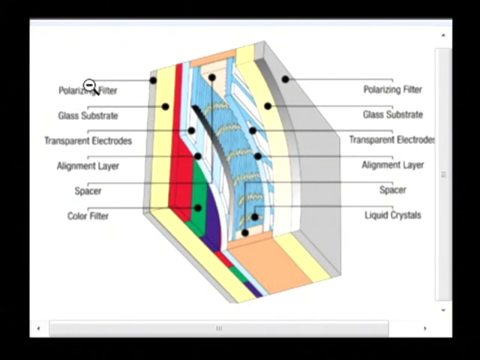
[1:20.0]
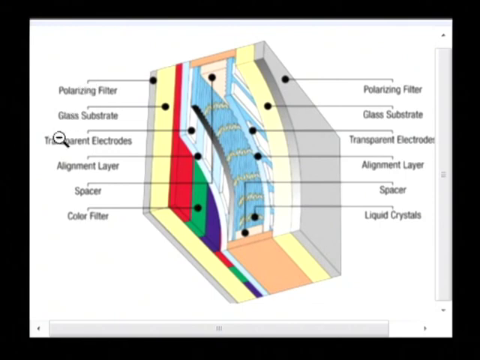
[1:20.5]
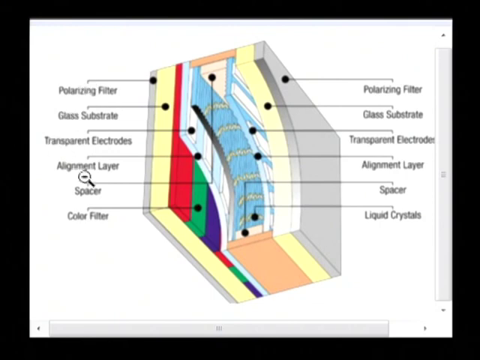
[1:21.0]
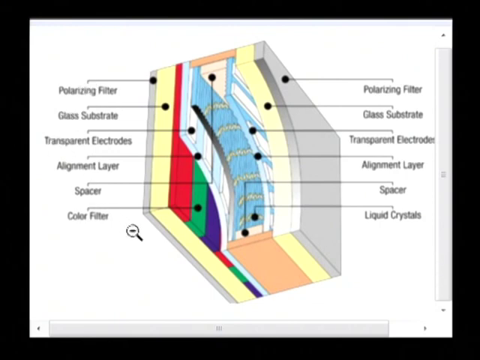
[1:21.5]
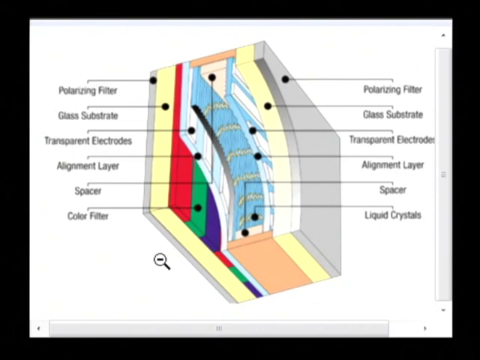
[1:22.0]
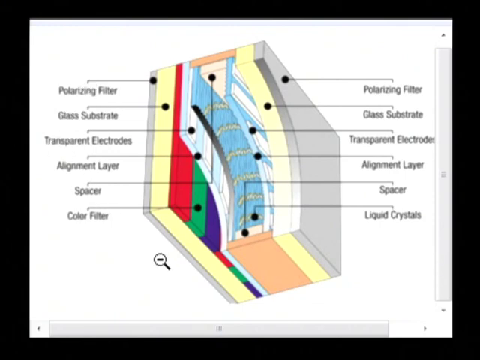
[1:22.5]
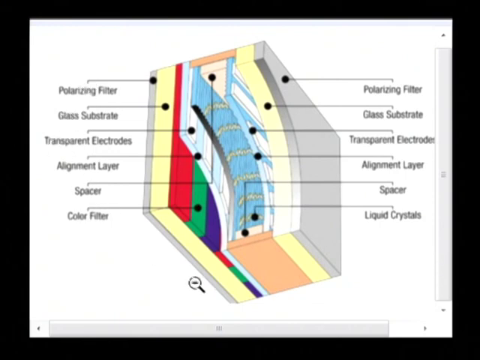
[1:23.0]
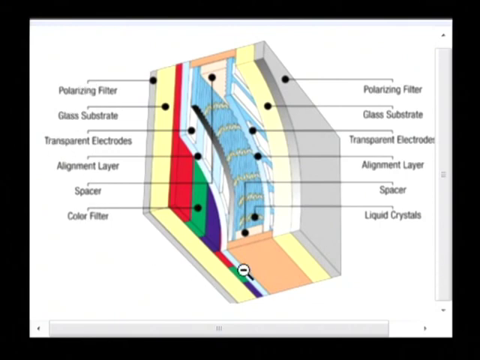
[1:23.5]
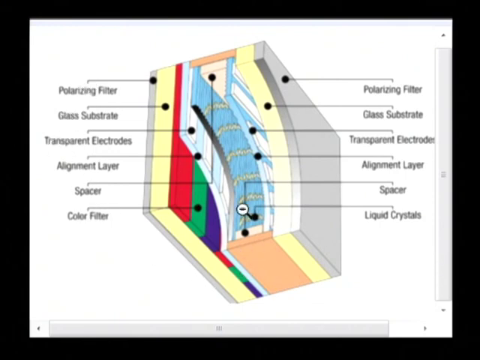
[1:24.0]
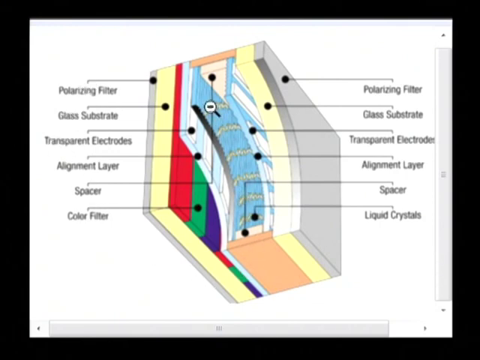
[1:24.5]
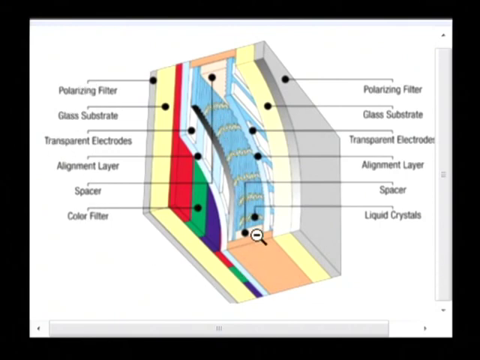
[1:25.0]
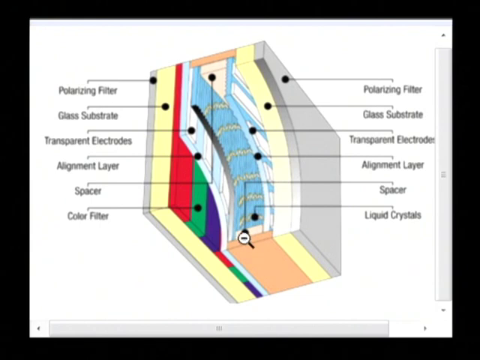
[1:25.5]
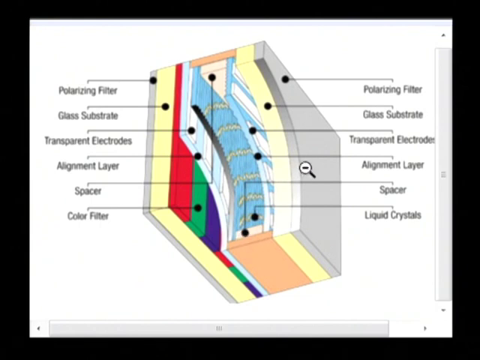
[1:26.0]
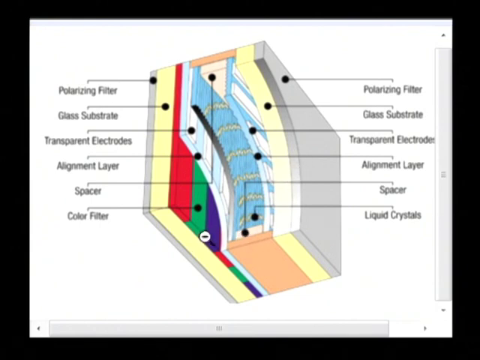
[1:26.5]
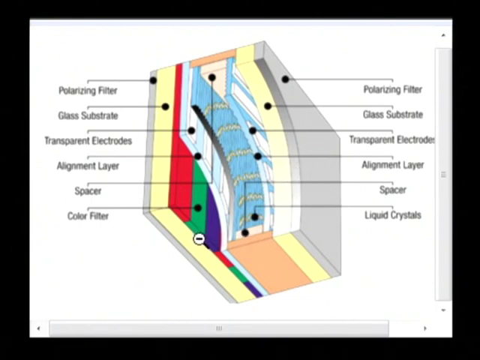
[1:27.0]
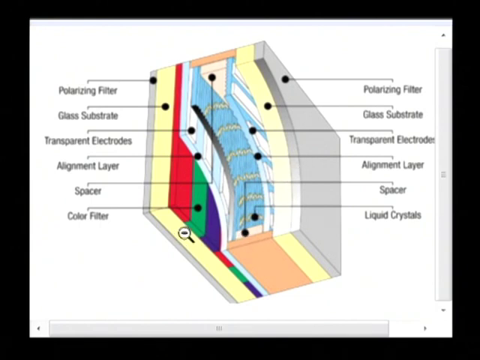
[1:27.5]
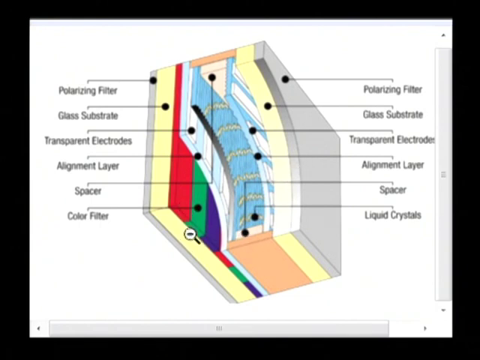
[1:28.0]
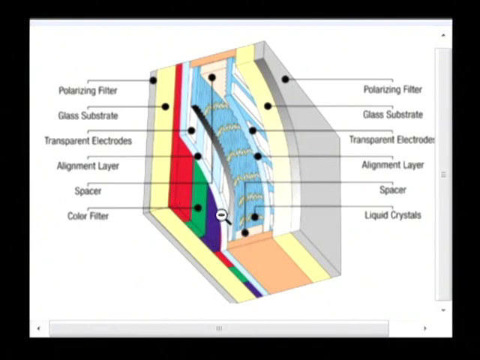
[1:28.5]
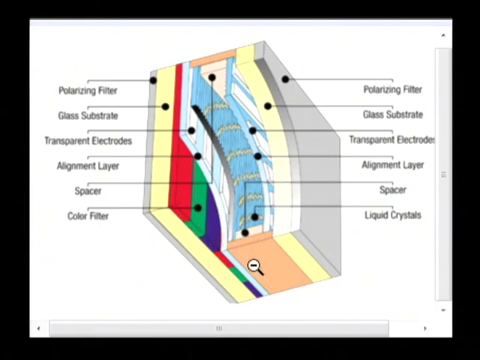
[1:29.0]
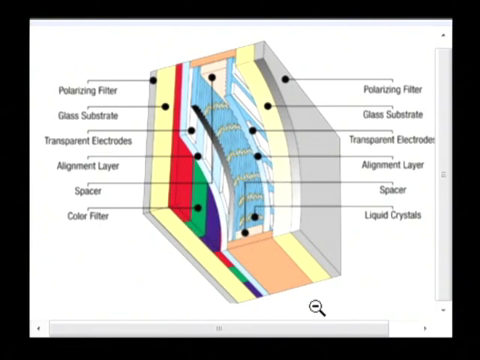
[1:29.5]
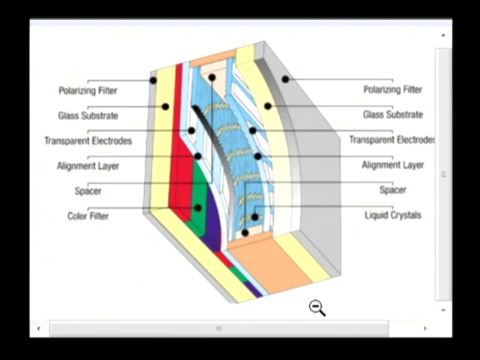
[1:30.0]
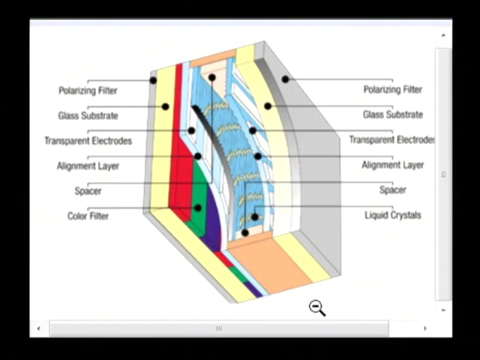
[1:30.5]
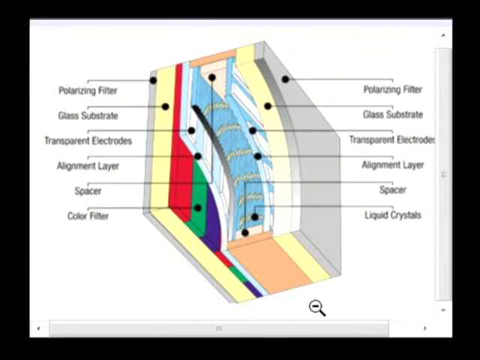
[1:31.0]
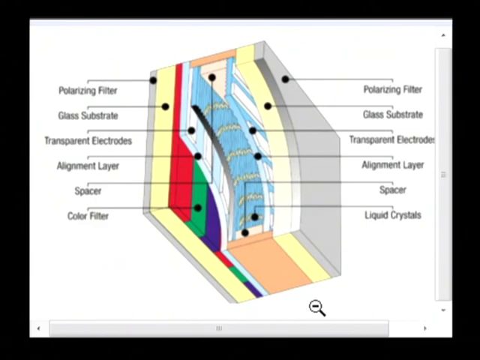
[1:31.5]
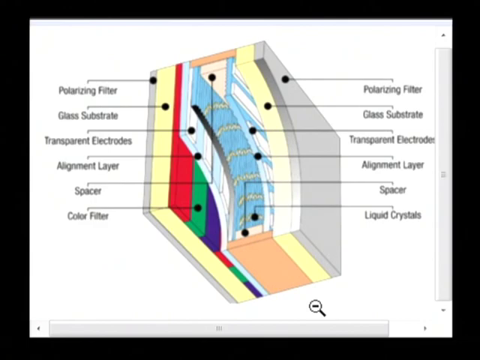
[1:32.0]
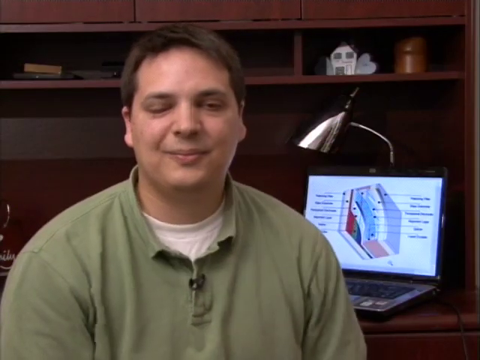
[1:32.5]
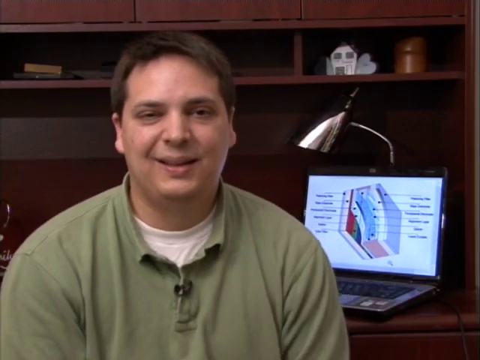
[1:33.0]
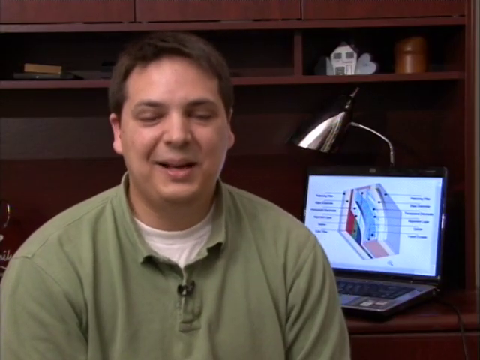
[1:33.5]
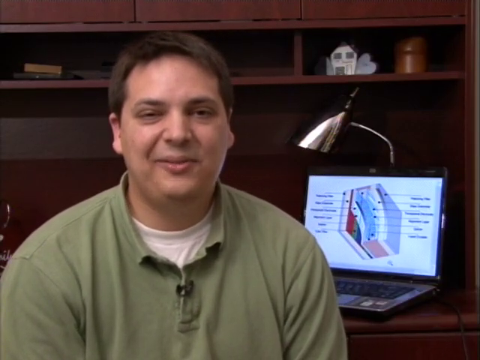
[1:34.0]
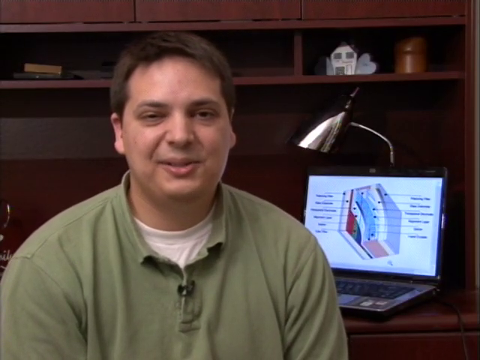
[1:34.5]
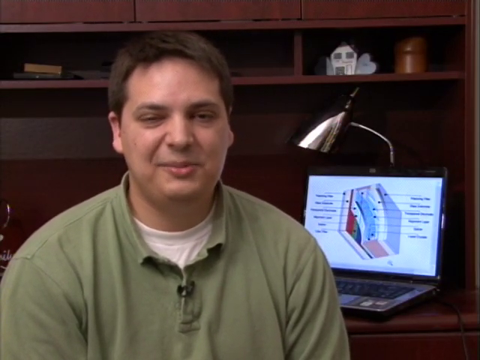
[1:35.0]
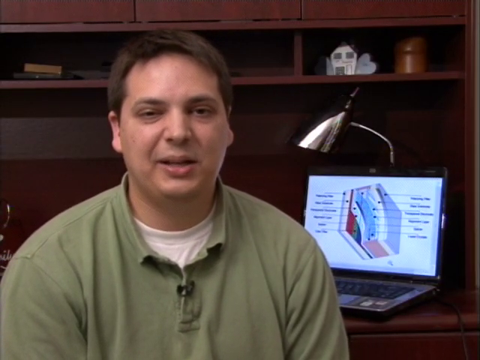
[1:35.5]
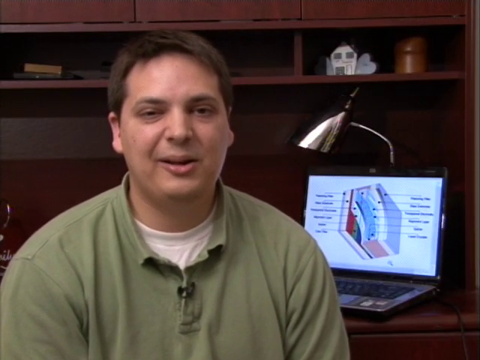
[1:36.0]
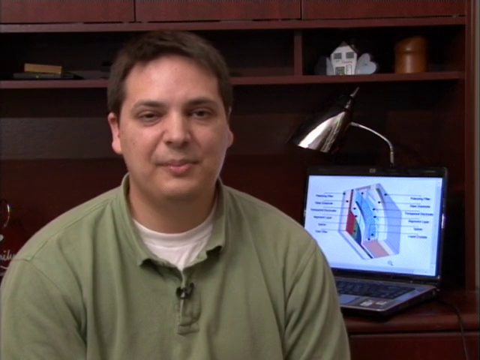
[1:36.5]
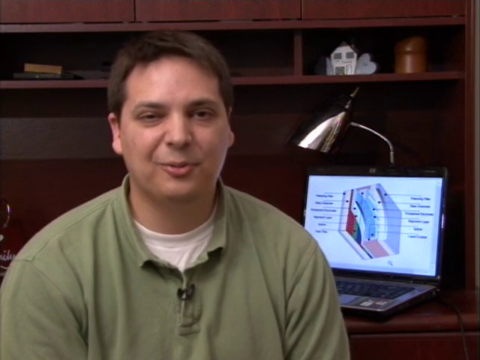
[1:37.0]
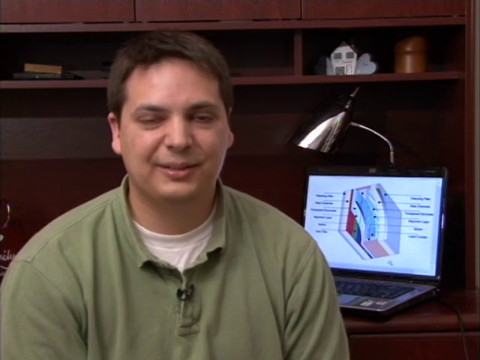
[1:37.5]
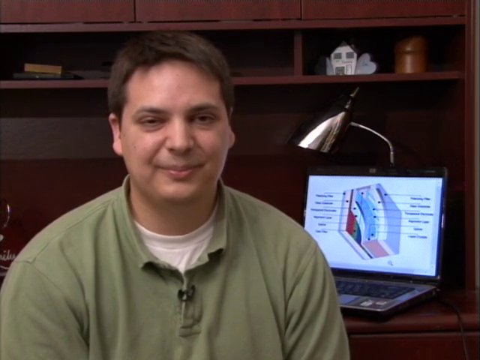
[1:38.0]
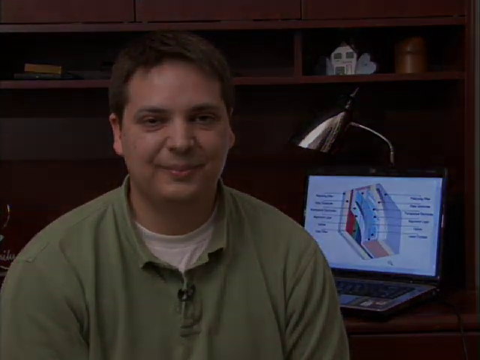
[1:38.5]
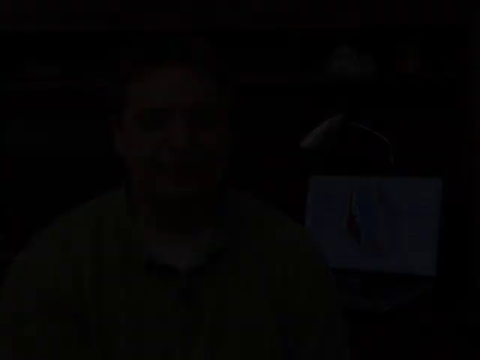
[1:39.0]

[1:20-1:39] The cursor goes over some of the text on the left side without stopping on any specific words, then rests in white open space. He brings the cursor back to the light blue section and drags it down as if highlighting it, then the cursor is on the orange part, then moves to the gray sheet that is kind of on the very right side of the diagram. He brings the cursor toward the red, blue and green stripes once again, then to the orange part, and then to the white space of the background. The video then returns to the man in the green shirt facing the camera, with the laptop in the background still showing the diagram. He again smiles as he talks to the camera. At the end, the video fades out slowly into a black screen.